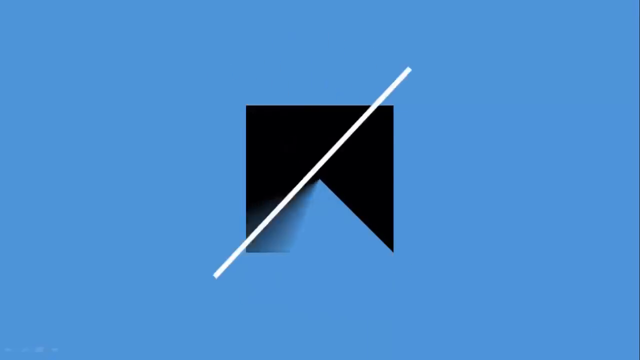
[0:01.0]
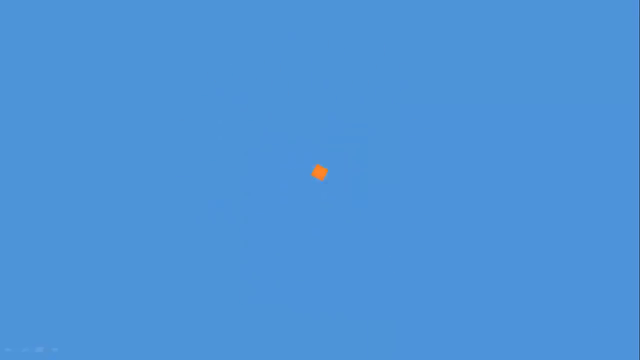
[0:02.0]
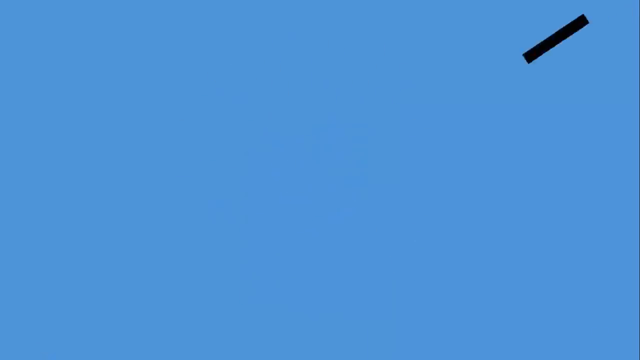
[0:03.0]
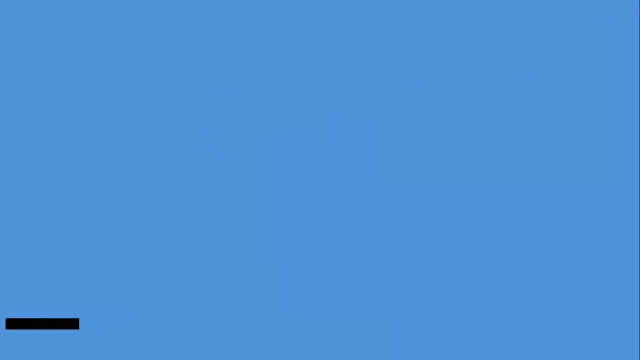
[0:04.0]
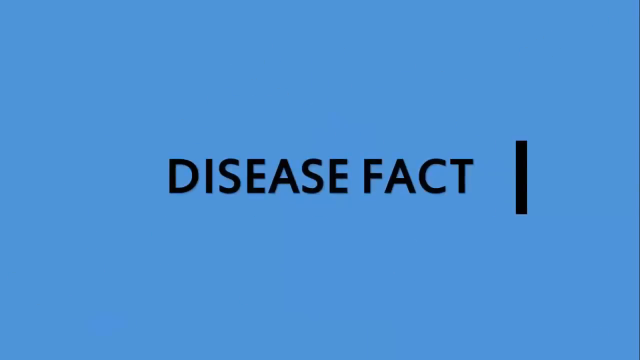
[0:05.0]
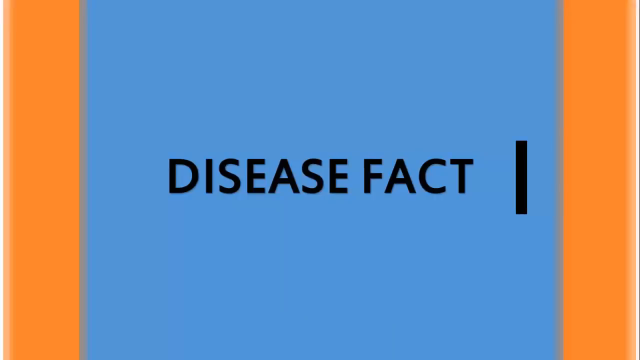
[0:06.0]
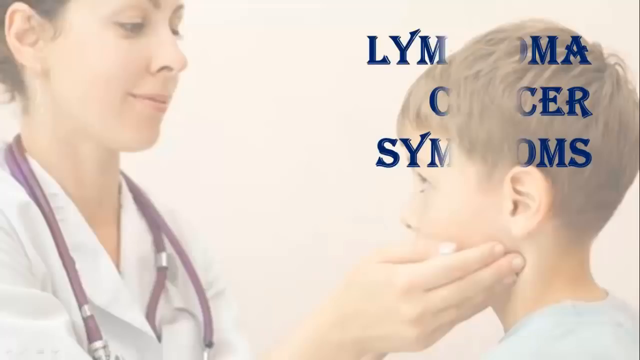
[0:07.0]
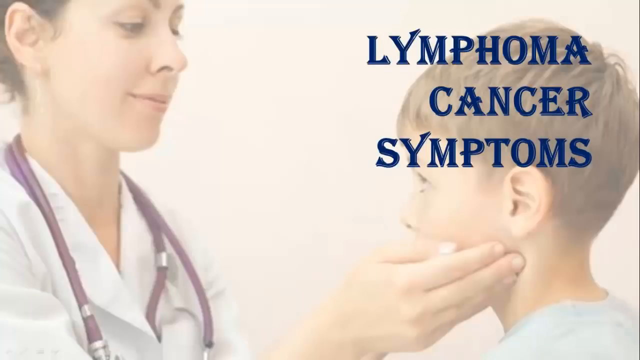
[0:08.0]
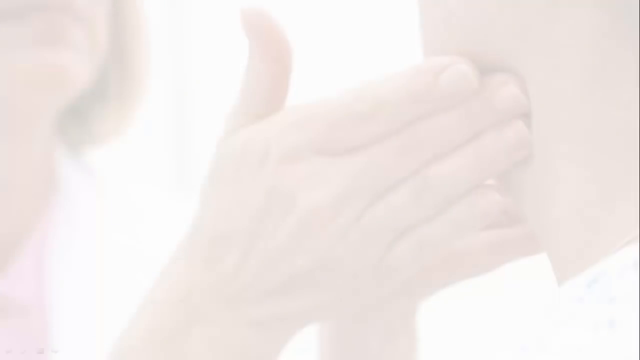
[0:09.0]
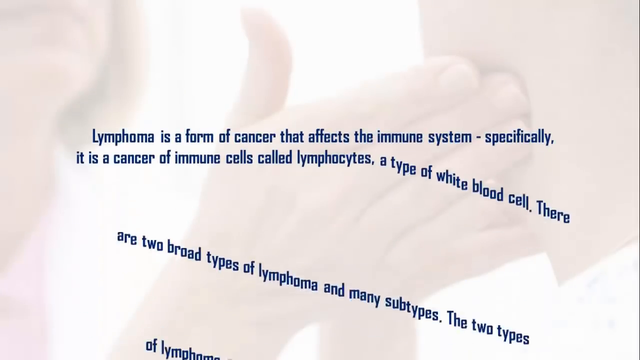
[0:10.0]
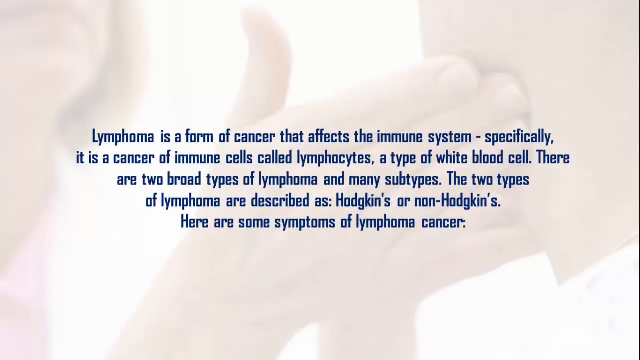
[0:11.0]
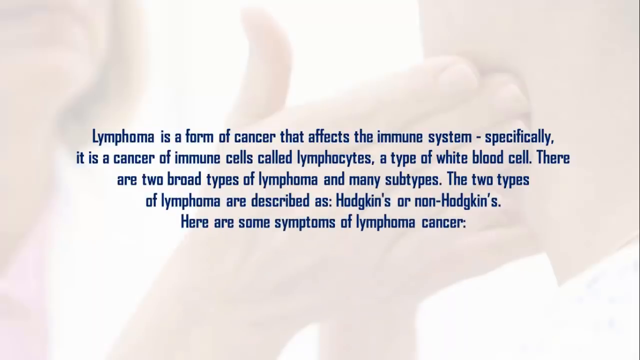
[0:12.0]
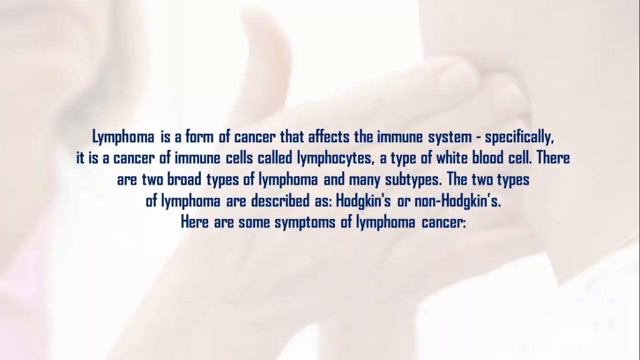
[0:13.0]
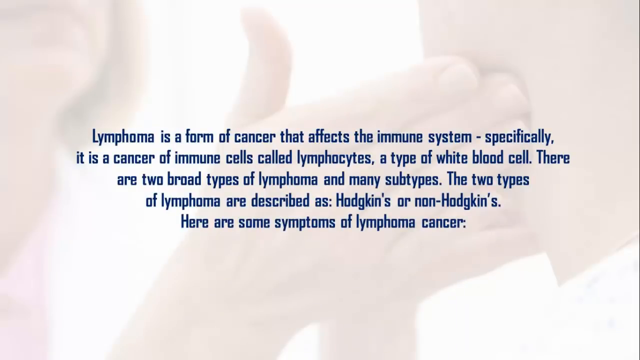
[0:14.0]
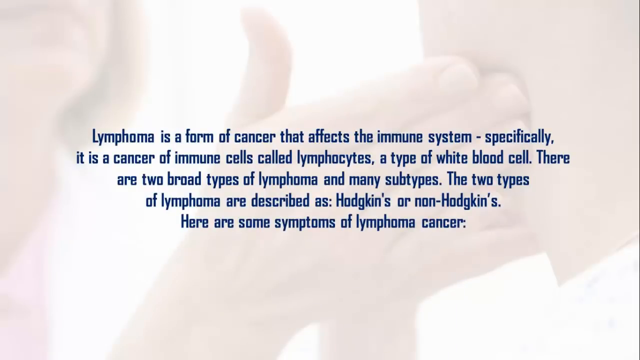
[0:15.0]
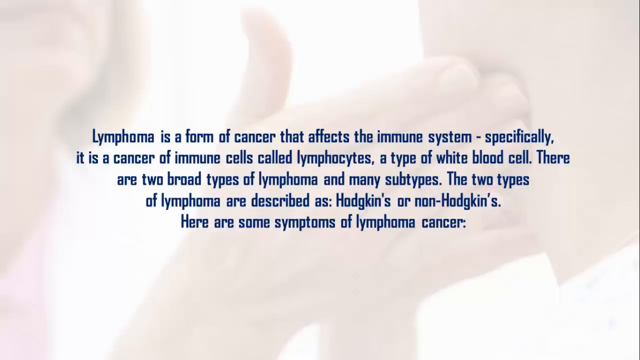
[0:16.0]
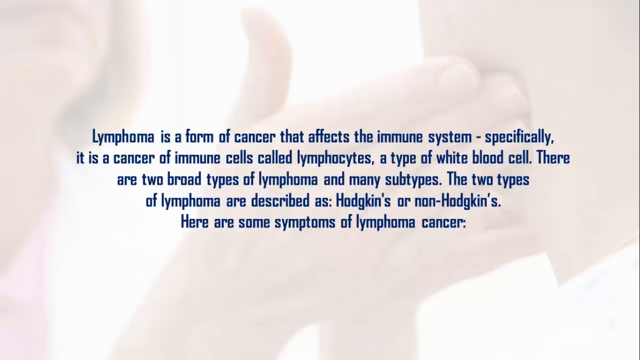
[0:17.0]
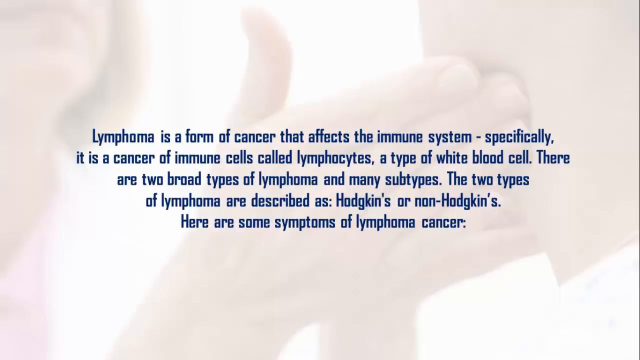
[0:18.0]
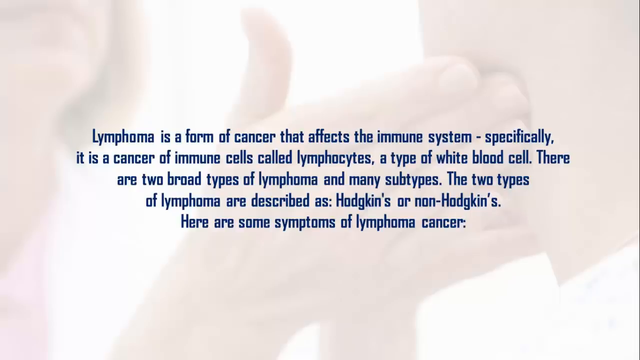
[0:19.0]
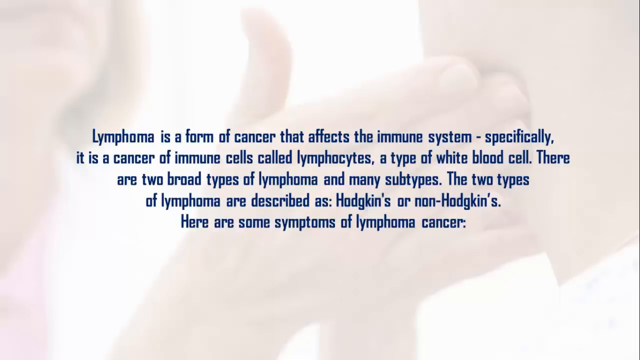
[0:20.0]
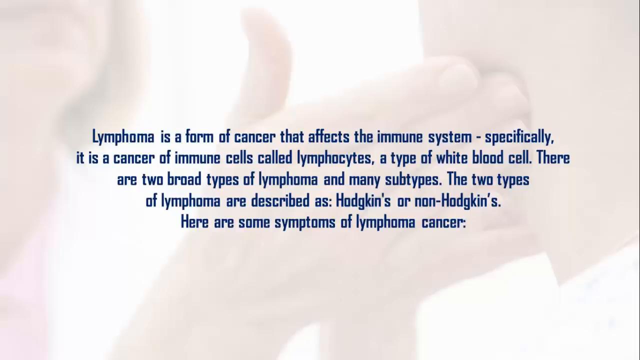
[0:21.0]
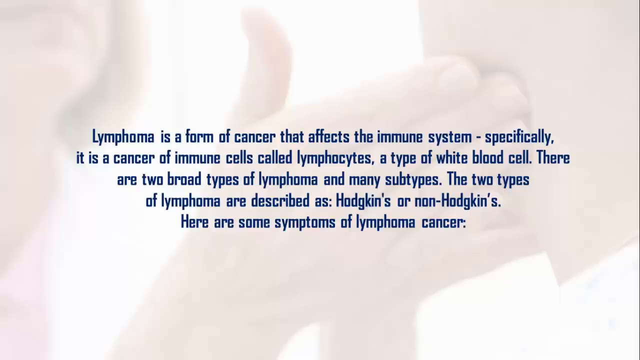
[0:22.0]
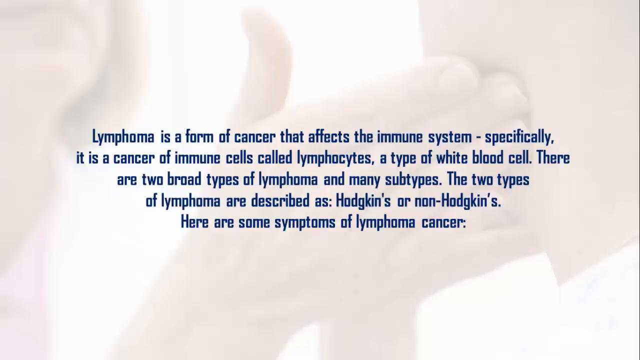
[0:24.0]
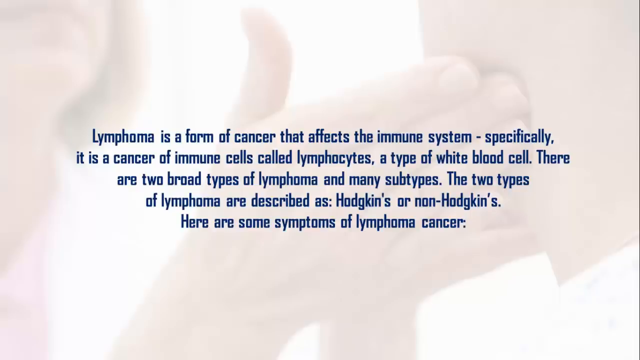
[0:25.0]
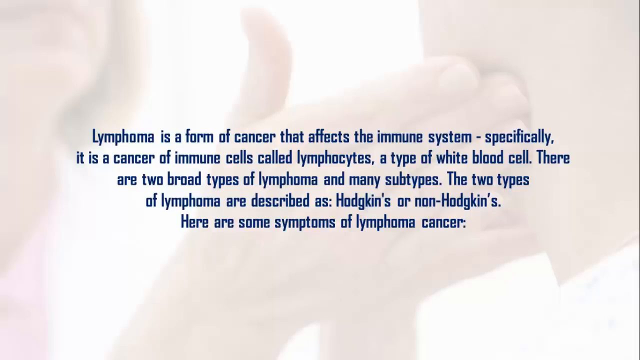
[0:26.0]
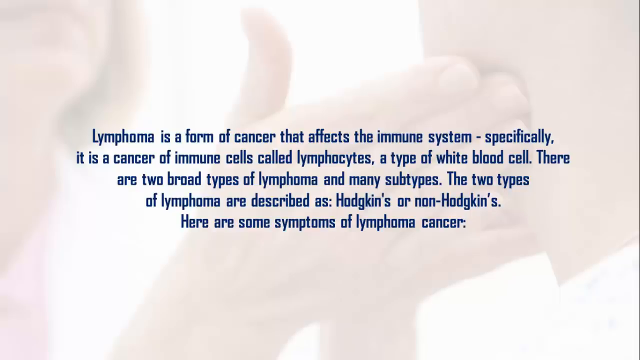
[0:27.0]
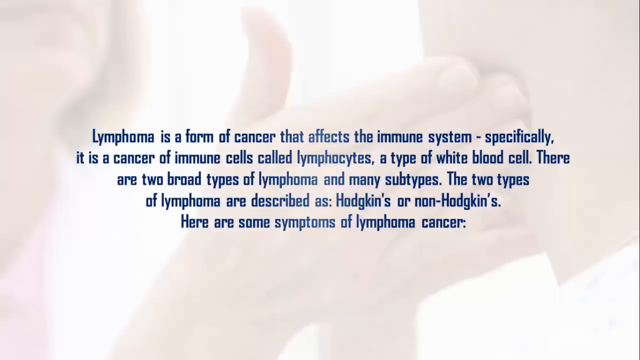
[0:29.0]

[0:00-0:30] The video opens on a light purple screen that turns bright blue, a square appears, and many colors move across the screen. A faded picture then appears in the background: a white background with a black gradient at the bottom. On the left is a picture of a lady doctor, showing part of her face; her hair is kind of short and blonde, and her right hand touches the cheek and neck of what looks like maybe a child, a boy in a white t-shirt. Blue text comes in, reading: "Lymphoma is a form of cancer that affects the immune system. Specifically, it is a cancer of immune cells called lymphocytes, a type of white blood cell. There are two broad types of lymphoma and many subtypes. The two types of lymphoma are described as Hodgkins or non-Hodgkins. Here are some symptoms of lymphoma cancer."